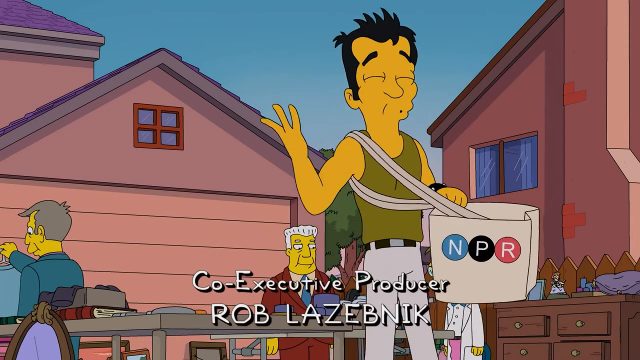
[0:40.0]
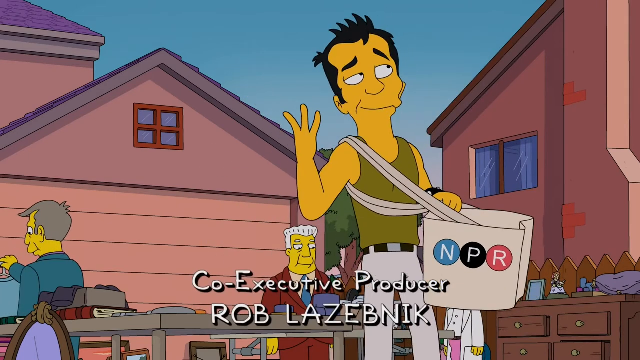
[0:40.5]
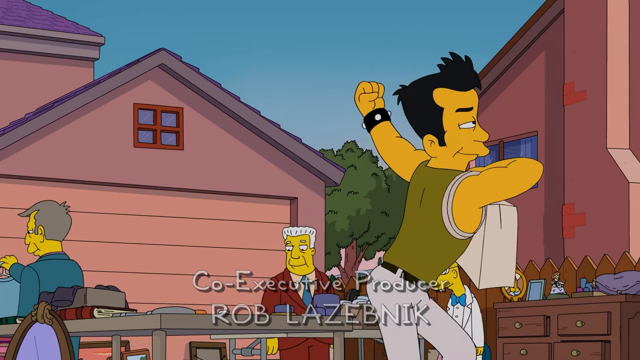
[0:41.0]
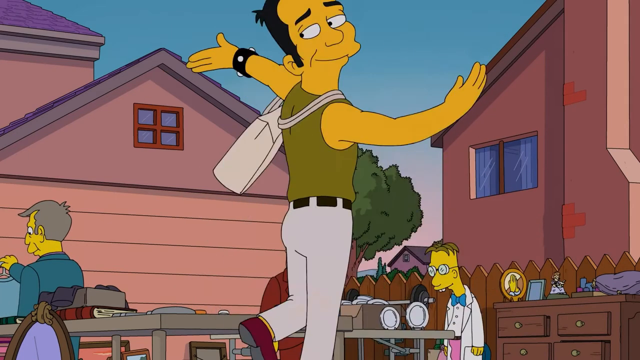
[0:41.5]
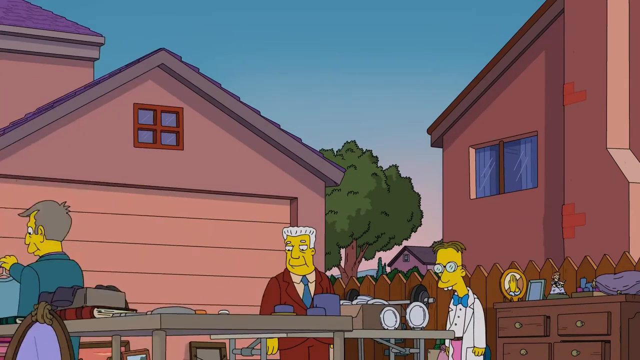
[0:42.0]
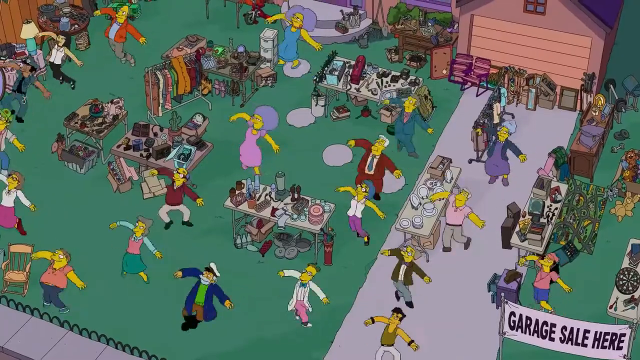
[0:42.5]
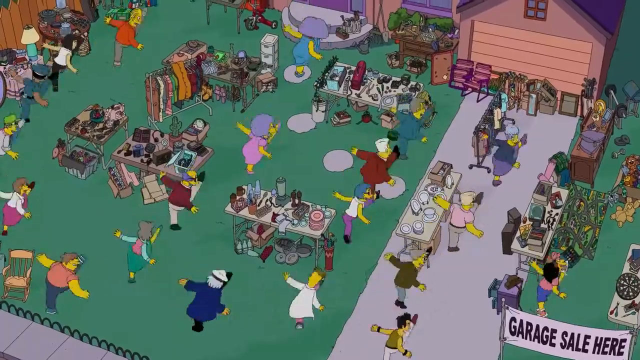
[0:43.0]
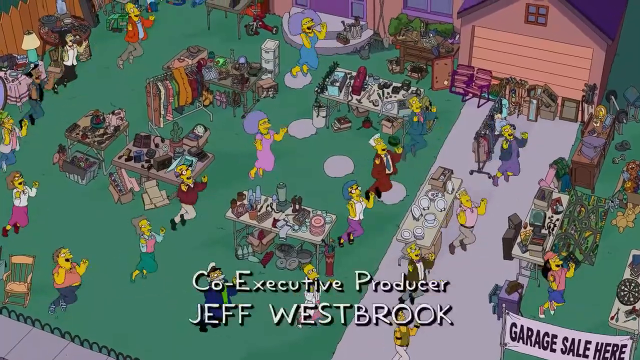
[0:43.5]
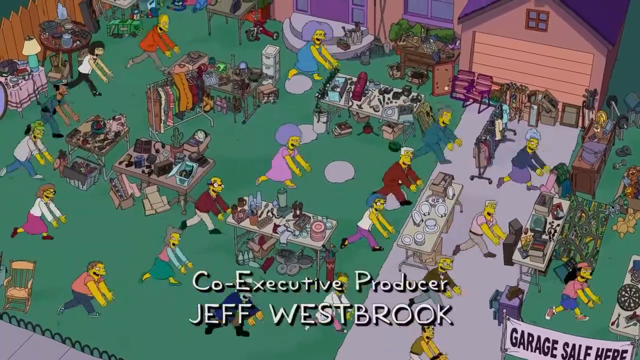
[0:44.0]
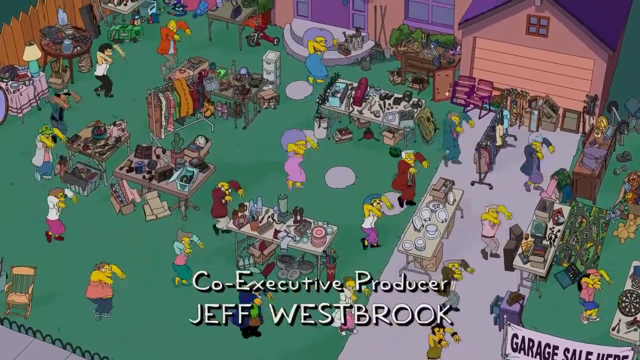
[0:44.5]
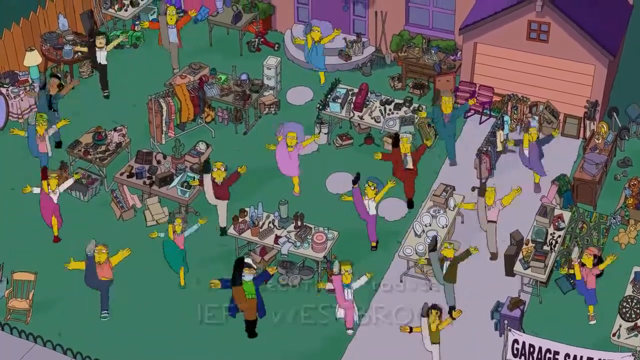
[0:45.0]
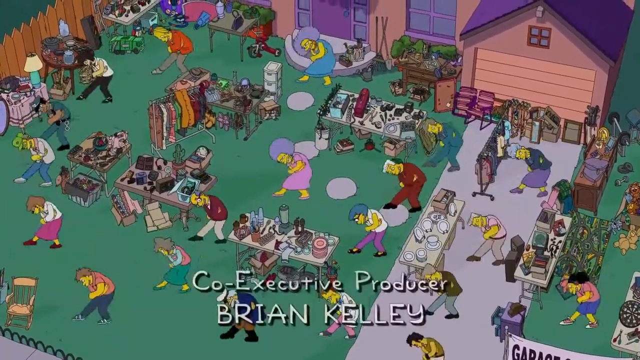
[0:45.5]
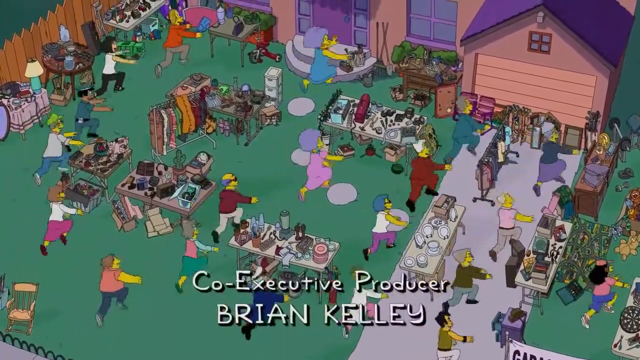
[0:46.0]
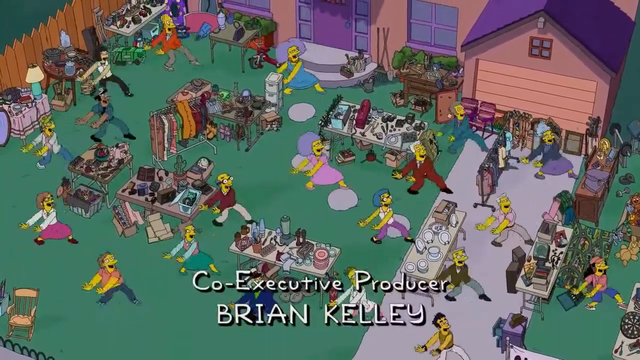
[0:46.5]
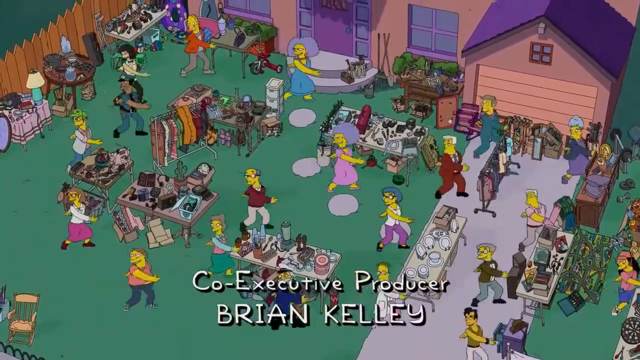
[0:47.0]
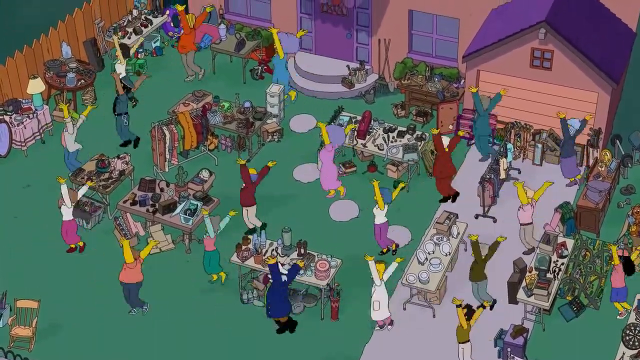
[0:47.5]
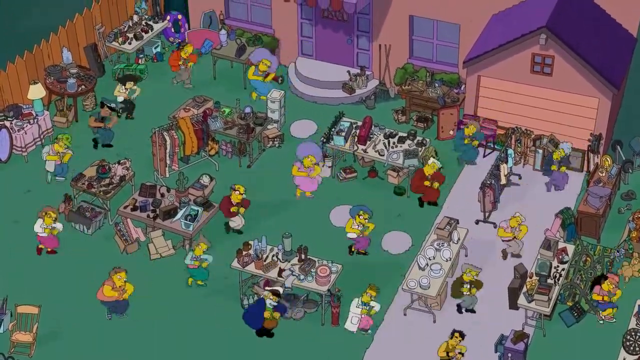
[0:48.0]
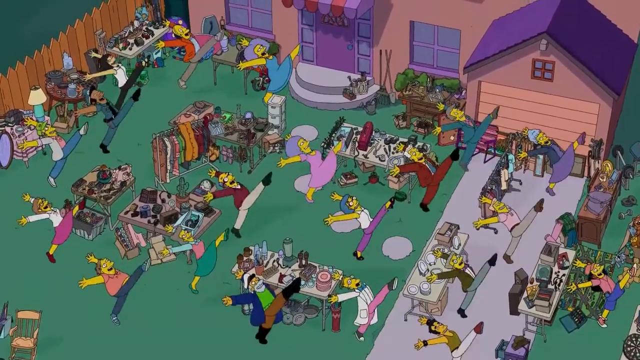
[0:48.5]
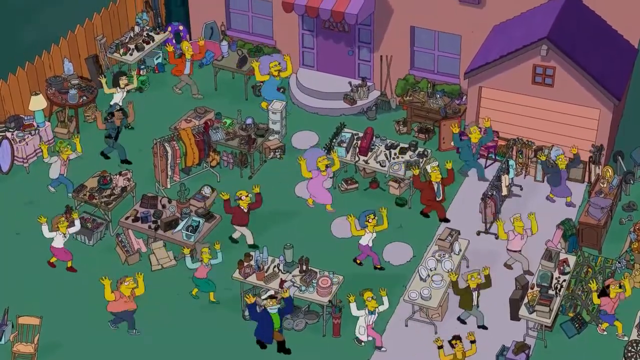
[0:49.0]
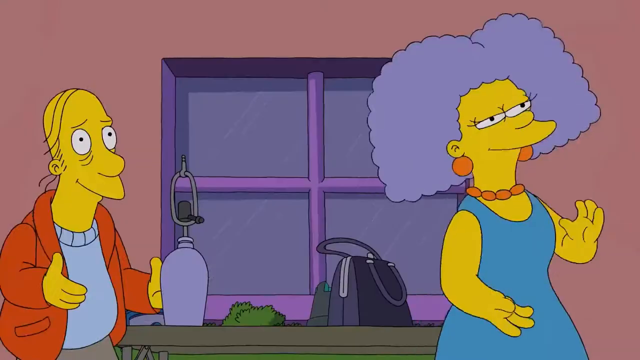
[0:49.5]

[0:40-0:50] A man has a bag that says "NPR." Text reads "co-exclusive producer Rob." The guy dances, and then everybody in town dances; all the townspeople look like they are dancing, turning around at the garage sale and kicking their feet. Text reads "co-exclusive producer Brian Kelly." The townspeople continue to dance, and another lady dances with someone. There seems to be a big garage sale at someone's house, with items all around the house, and it looks like everybody in town is dancing and super happy. At the very end, someone kind of opens his window.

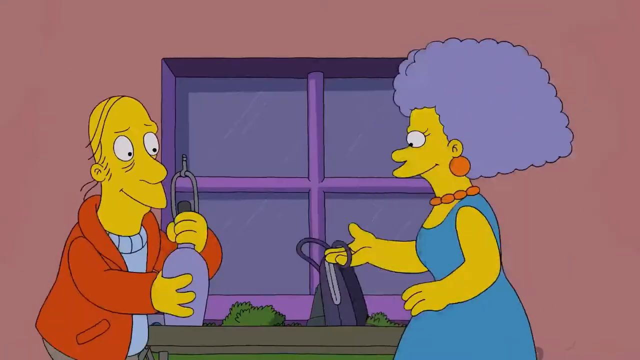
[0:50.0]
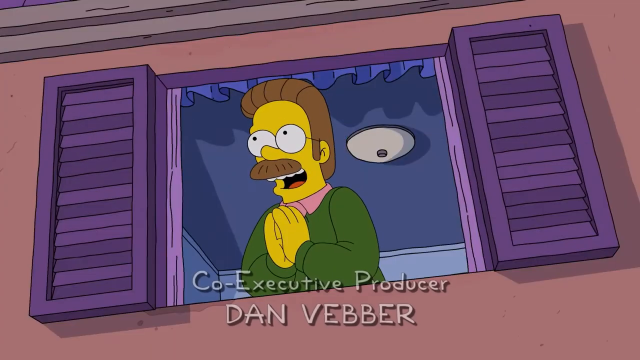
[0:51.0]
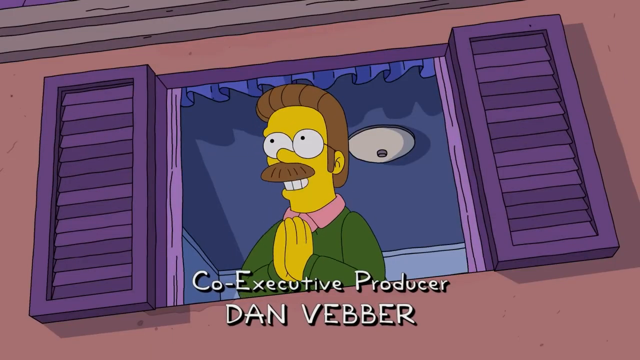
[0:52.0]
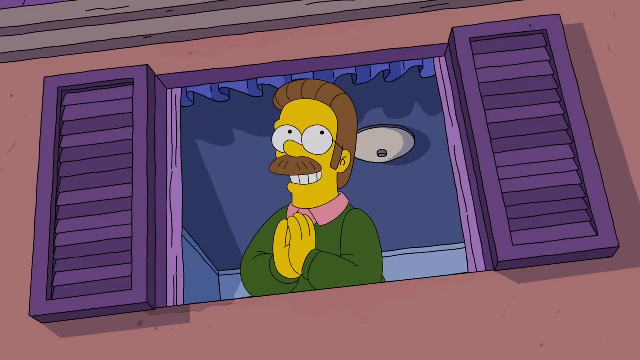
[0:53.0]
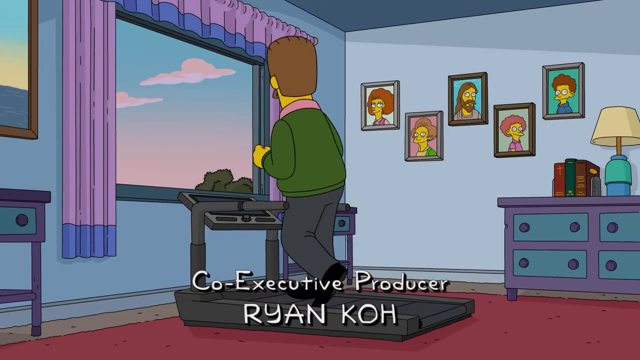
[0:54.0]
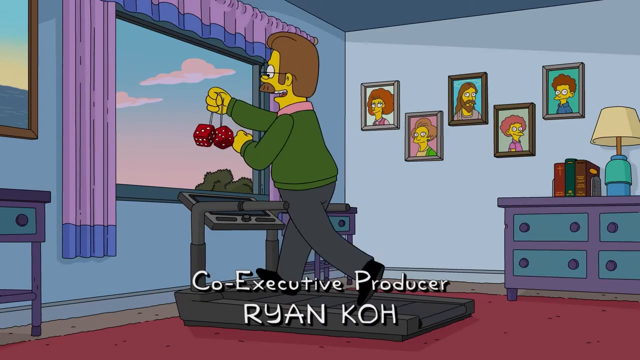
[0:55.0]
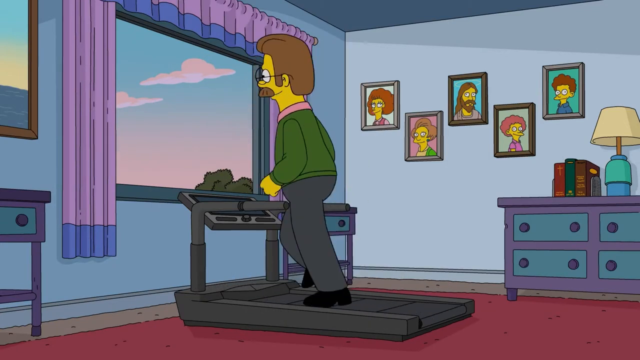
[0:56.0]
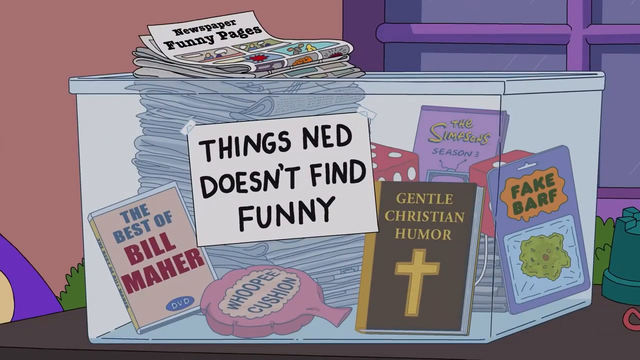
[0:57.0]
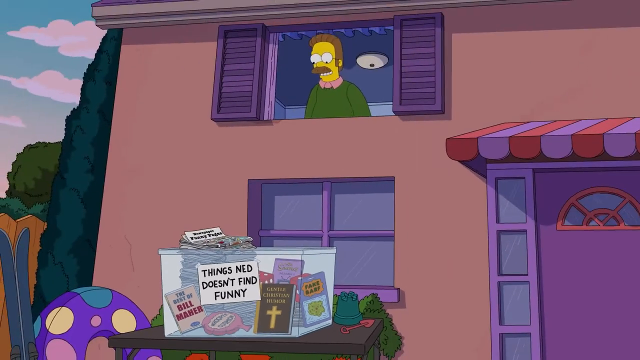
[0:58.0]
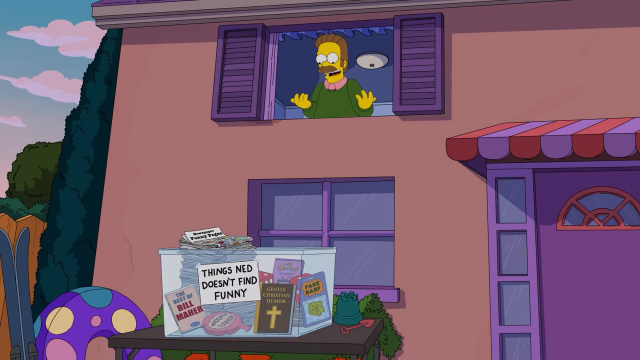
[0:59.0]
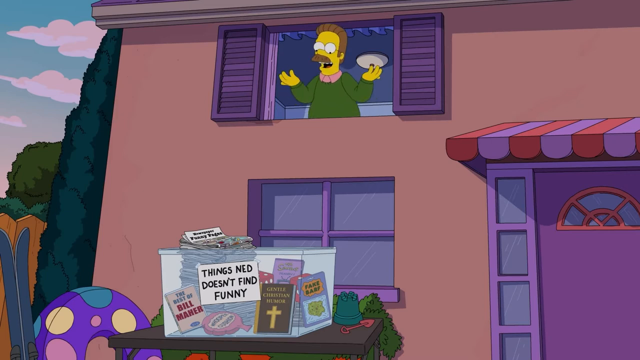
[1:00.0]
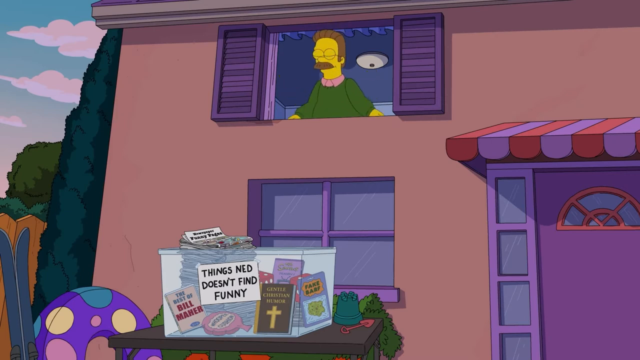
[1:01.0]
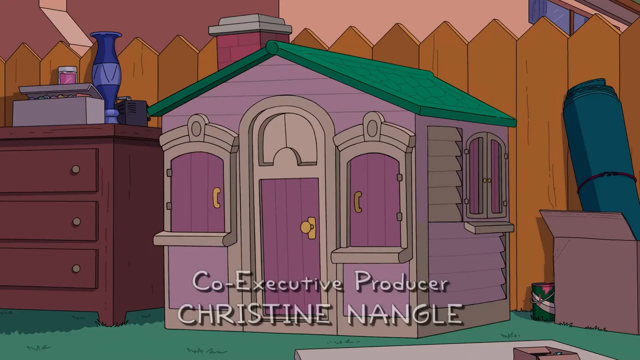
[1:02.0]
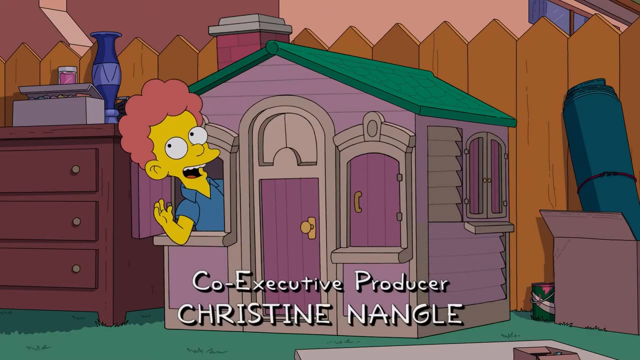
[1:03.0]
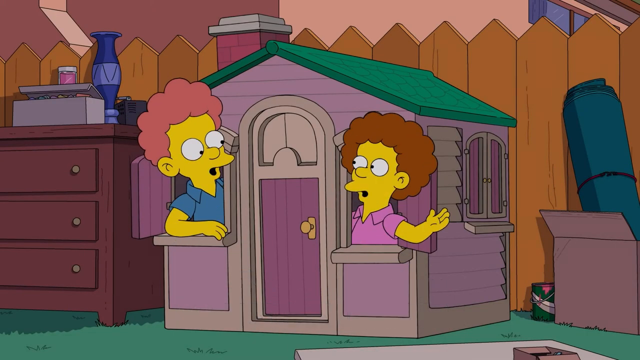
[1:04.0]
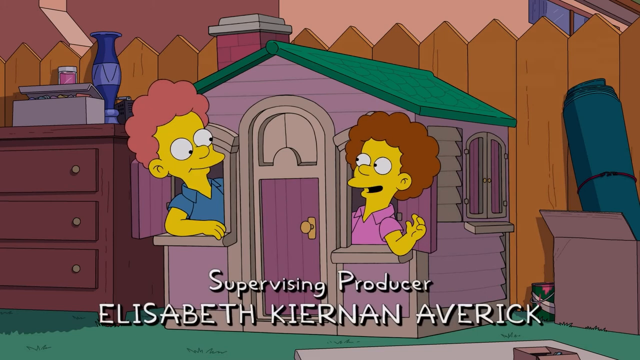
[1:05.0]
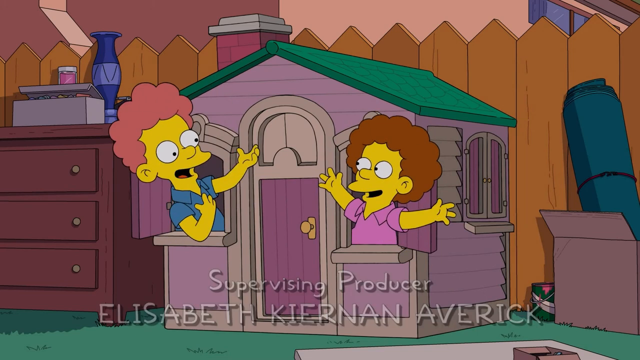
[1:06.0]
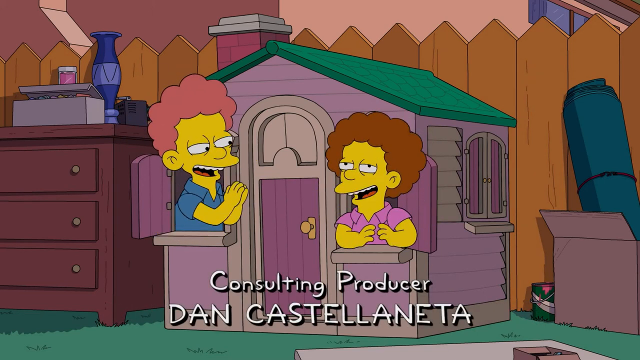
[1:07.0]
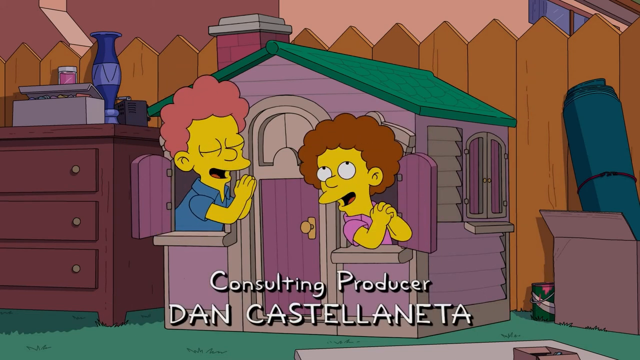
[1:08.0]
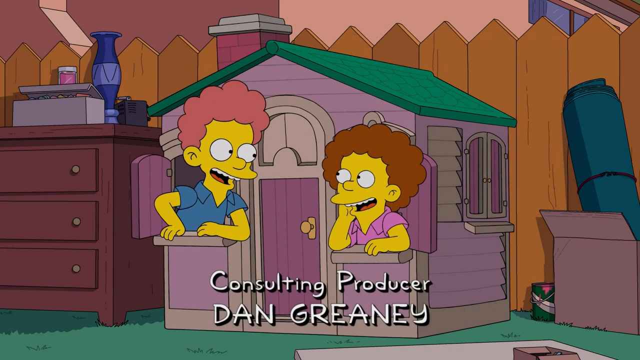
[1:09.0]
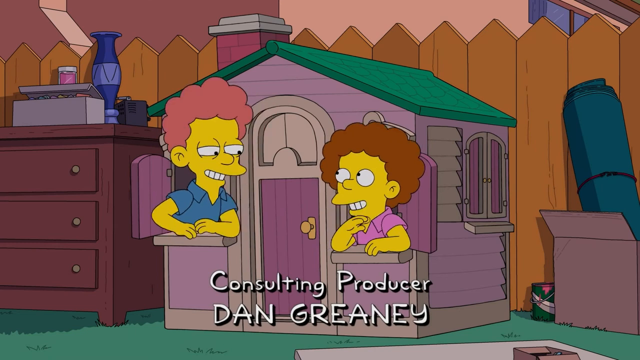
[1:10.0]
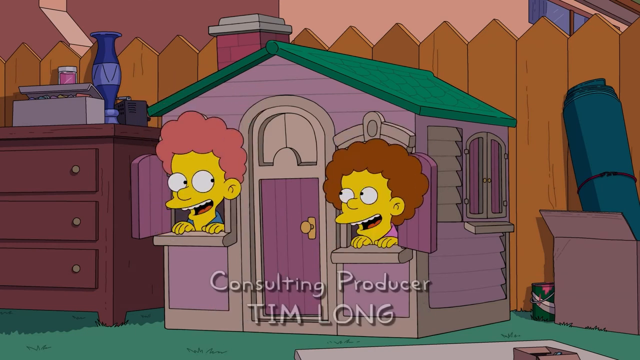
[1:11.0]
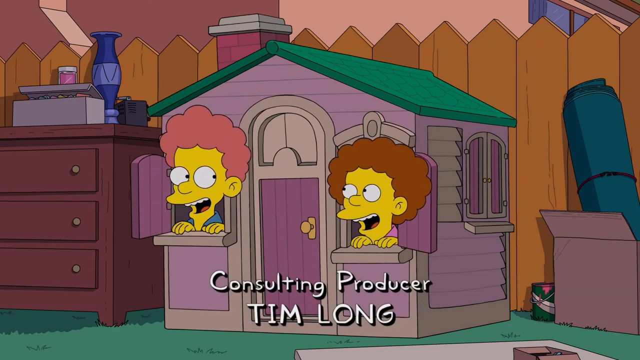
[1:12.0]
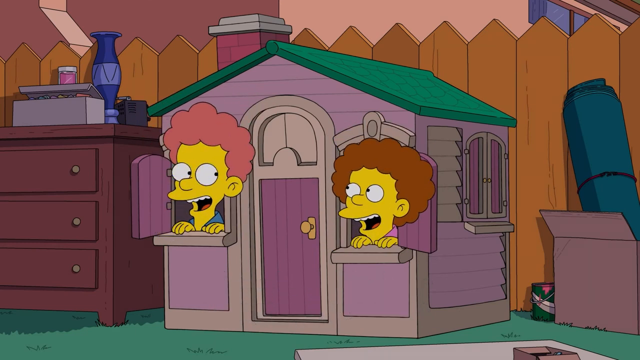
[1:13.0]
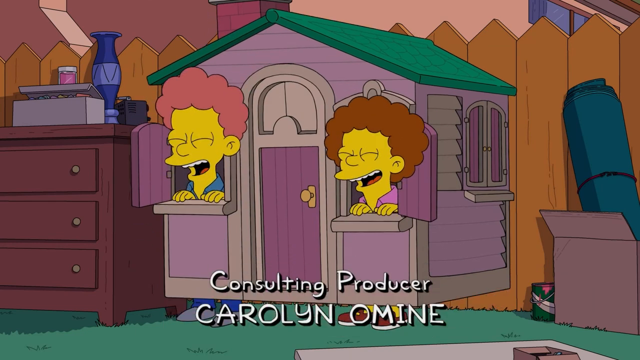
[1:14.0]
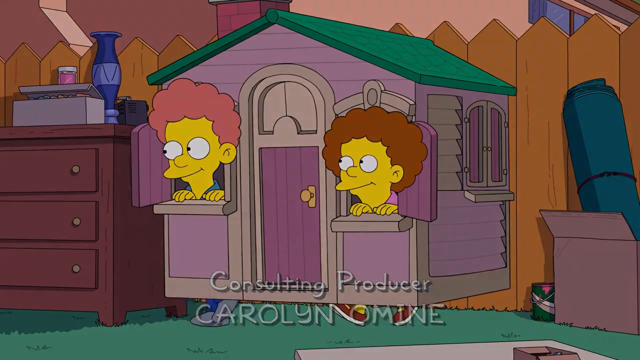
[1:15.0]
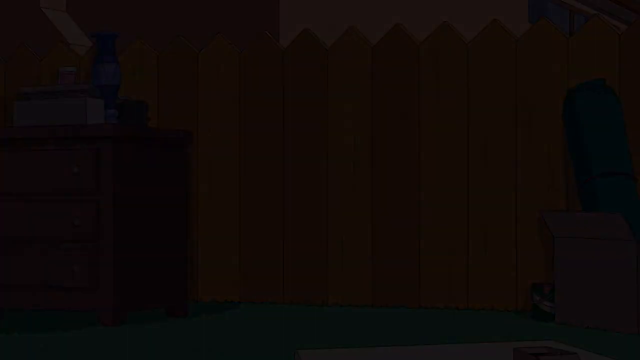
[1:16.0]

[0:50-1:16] A man holds a lamp and a lady holds a purse, and they dance around. Someone opens a window; he is super happy, looking around at the garage sale and smiling, and he has a big mustache. He is walking on his treadmill, and as he walks he tosses some dice into something labeled "things Ned doesn't find funny," which looks like a box that also holds the best of Bill Maher, a whoopee cushion, gentle Christian humor and the Simpsons. He looks down from his window. Next comes a playhouse with a little boy in it, then another little boy. Text reads "supervising producer Elizabeth Karen Averitt" as both boys play in the playhouse, then "consulting producer Dan Greeney"; the boys look like they are singing to each other while playing. Then they run away with the playhouse.